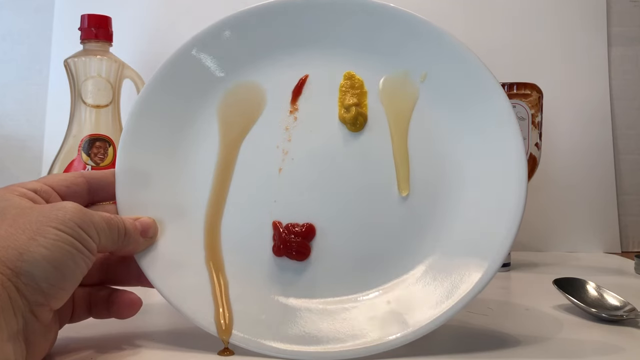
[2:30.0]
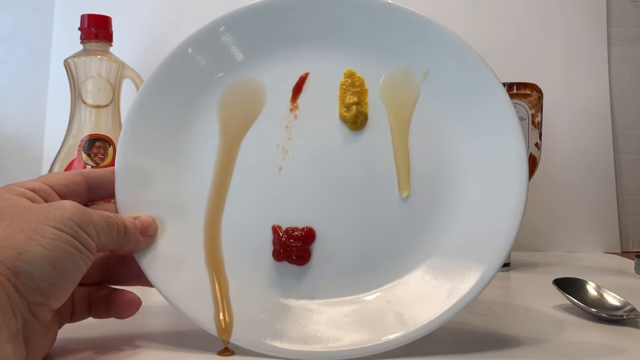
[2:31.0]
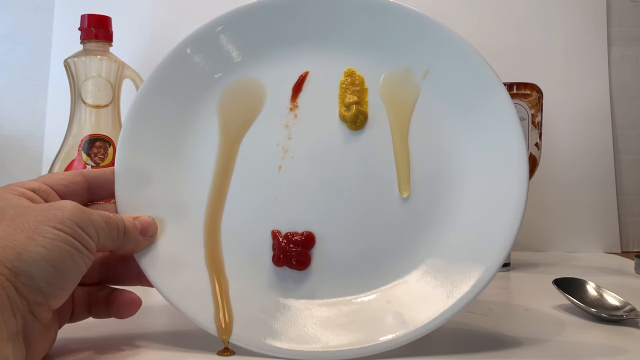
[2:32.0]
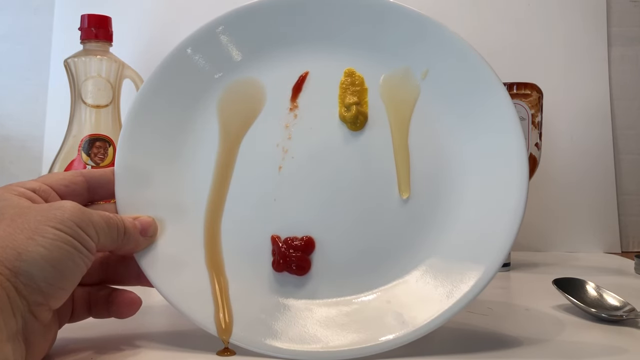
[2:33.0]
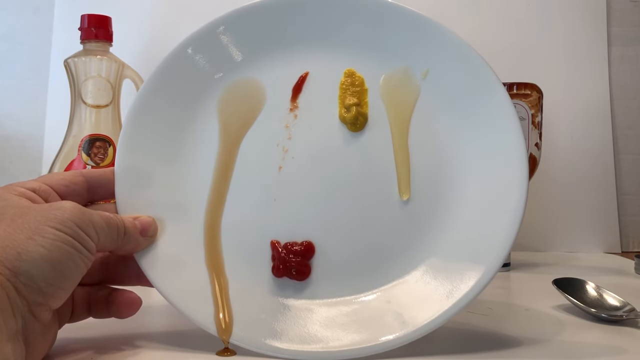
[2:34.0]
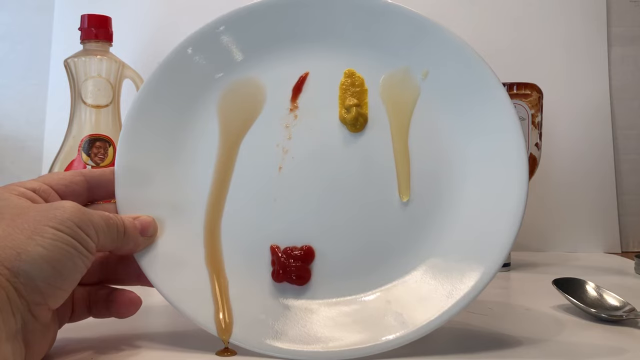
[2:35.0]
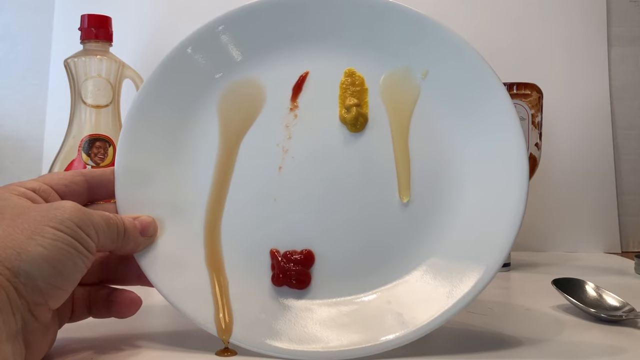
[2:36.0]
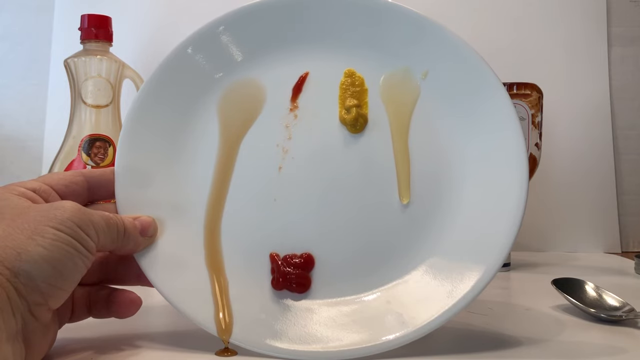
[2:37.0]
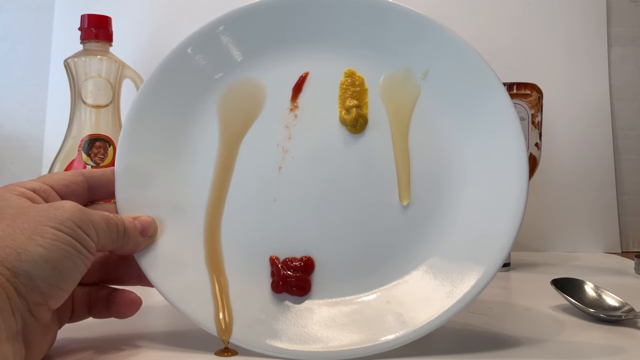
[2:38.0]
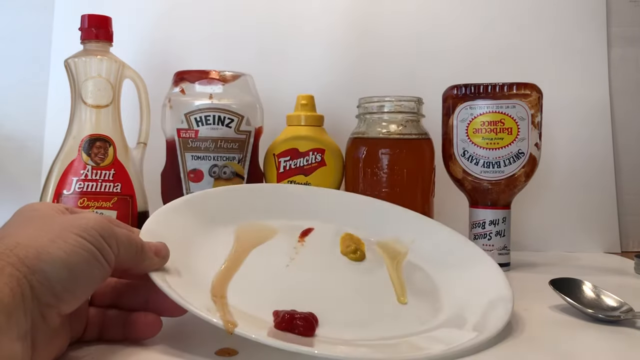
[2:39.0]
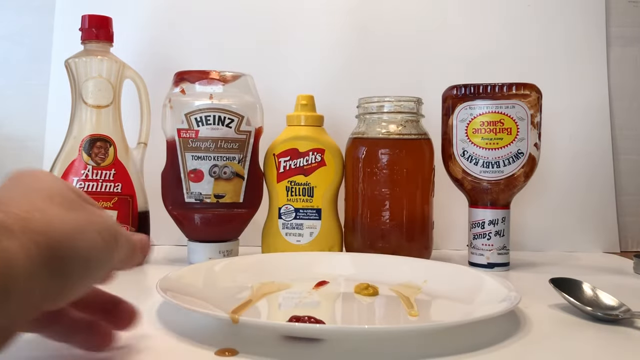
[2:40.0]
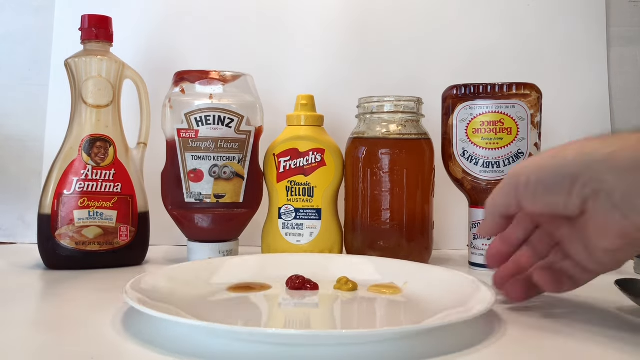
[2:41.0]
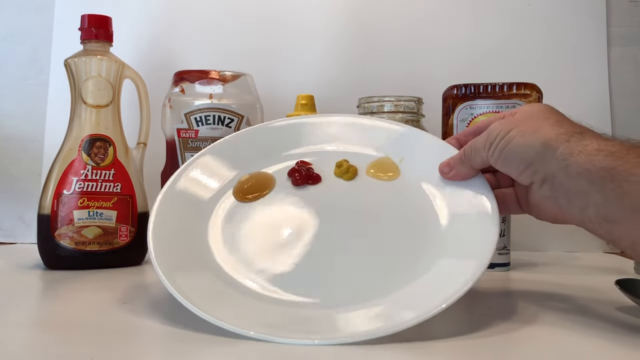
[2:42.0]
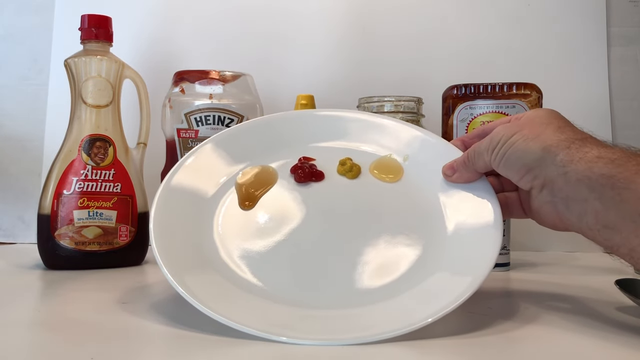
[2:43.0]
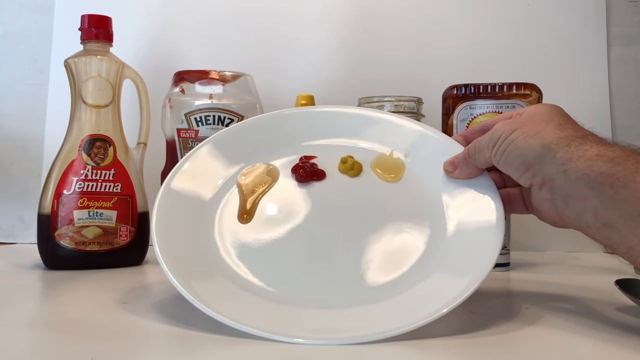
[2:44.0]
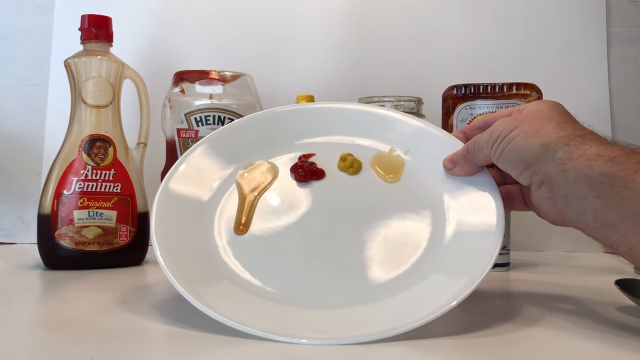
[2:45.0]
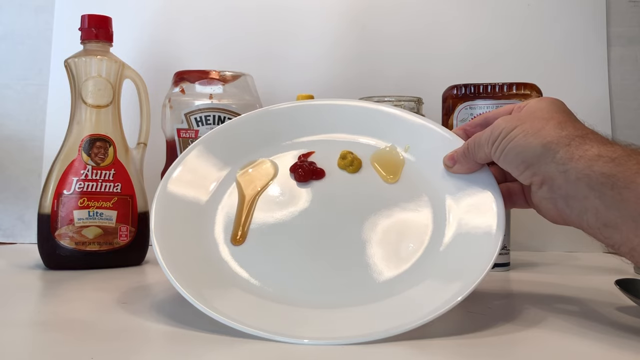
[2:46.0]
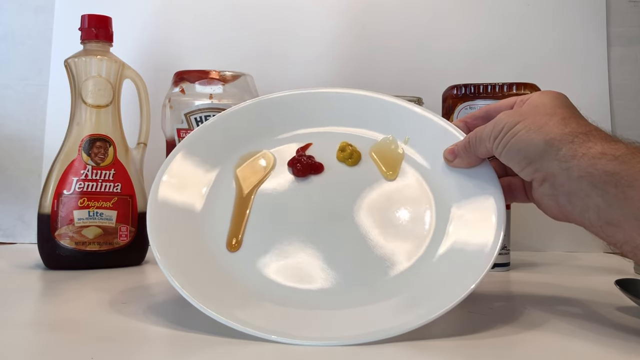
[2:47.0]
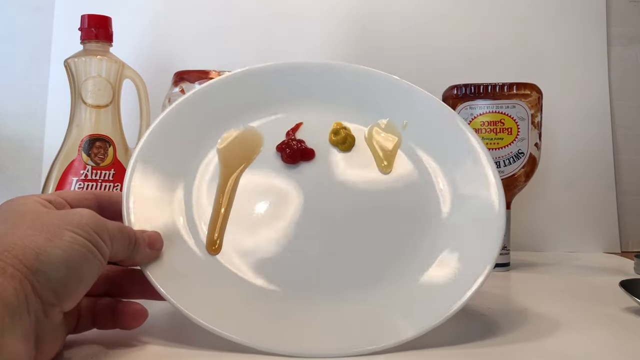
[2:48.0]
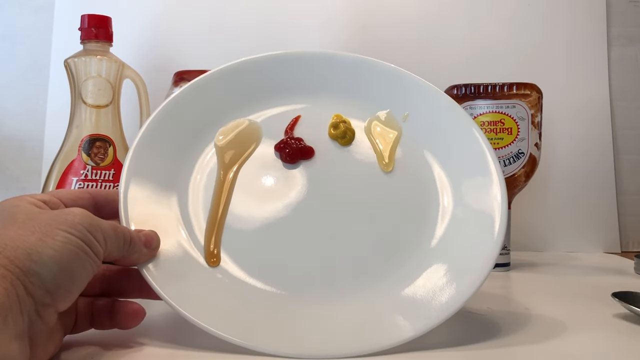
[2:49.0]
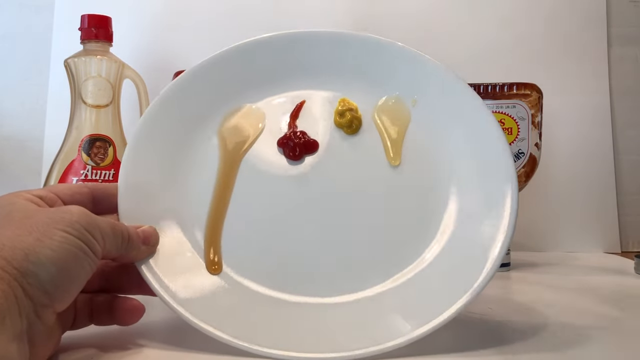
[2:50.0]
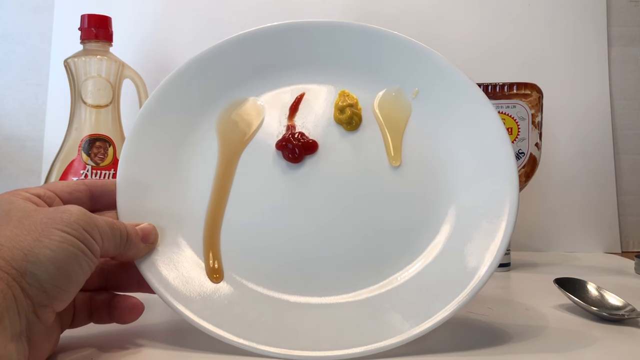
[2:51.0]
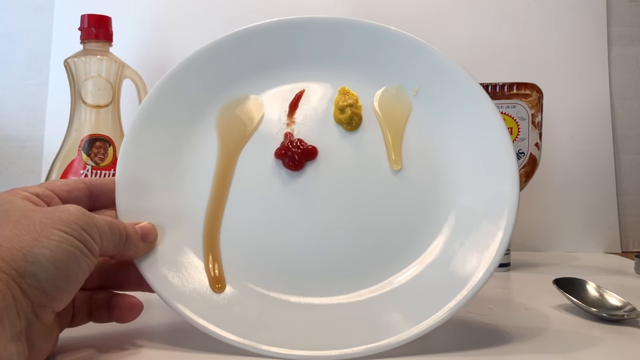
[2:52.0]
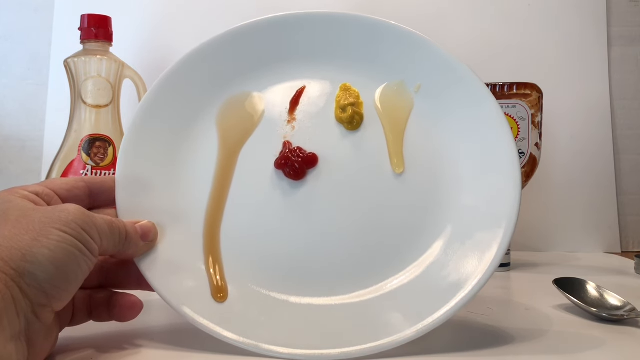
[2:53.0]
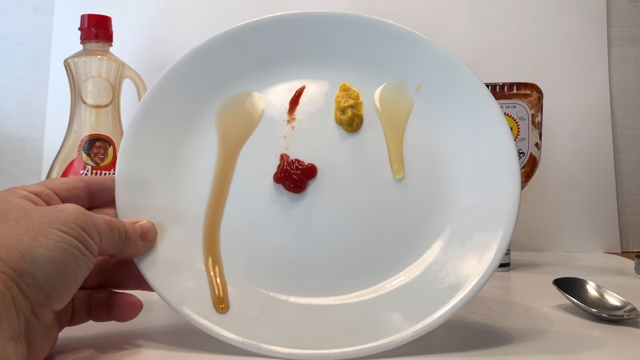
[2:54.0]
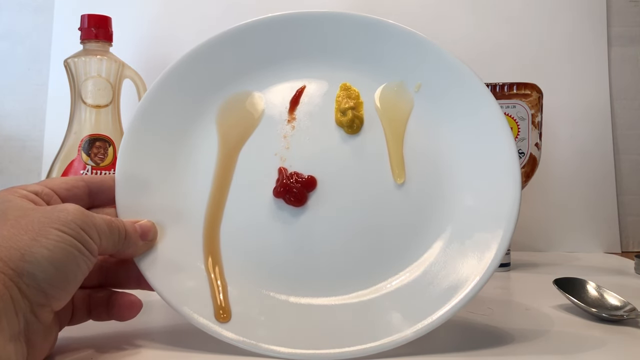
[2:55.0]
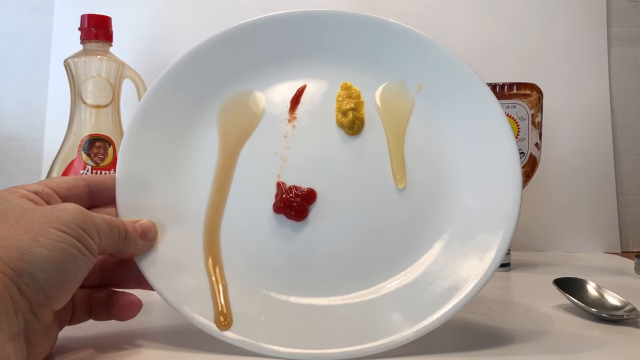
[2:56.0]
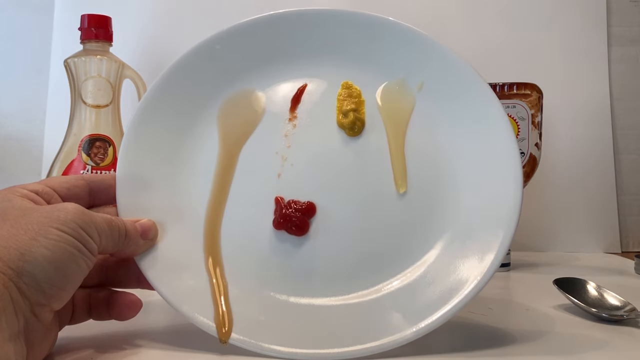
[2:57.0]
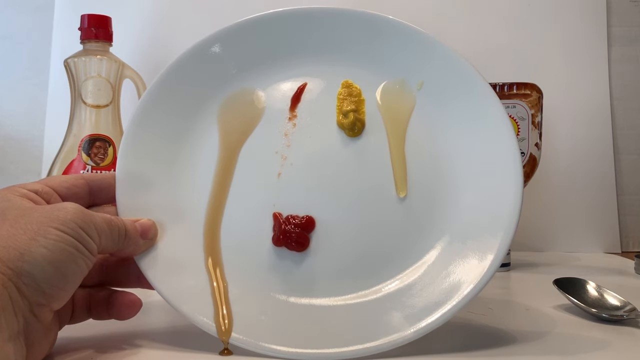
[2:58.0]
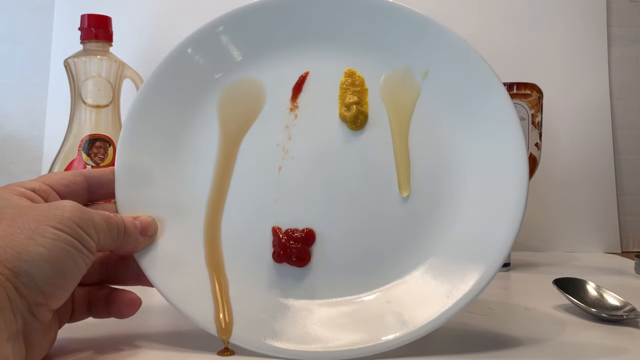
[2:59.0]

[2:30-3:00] The man holds the white plate with his right hand; the syrup is behind his hand, and the barbecue sauce on the right side of the plate is mostly covered. The syrup is in the lead and drips onto the countertop. The ketchup is in second and does not leave much of a stain. The mustard does not really move and is in last place, while the honey tries to keep up. He puts the plate down aggressively with his left hand. The footage is then played back at a faster speed: he holds the plate with his right hand with all four condiments on it, the syrup starts to drip first followed by the honey, he grabs the plate with his left hand and smacks the top of it a few times with a silver spoon, the ketchup starts to move, and the syrup hits the counter first.